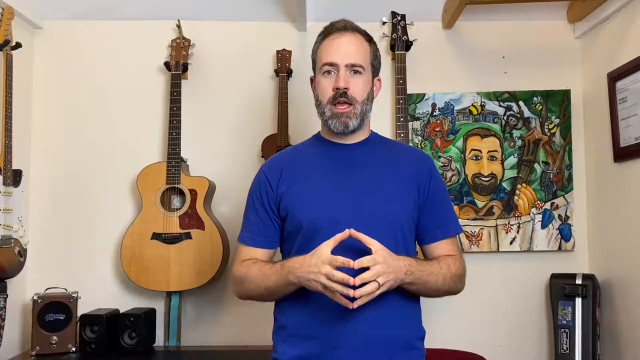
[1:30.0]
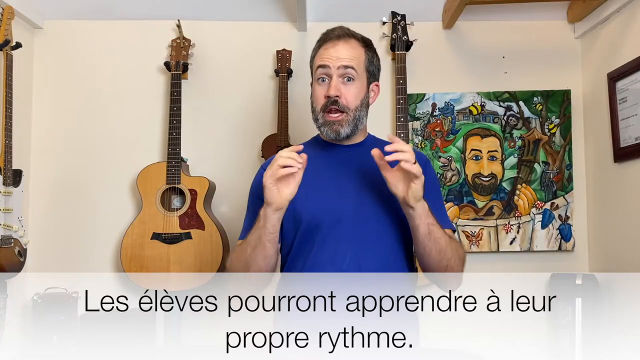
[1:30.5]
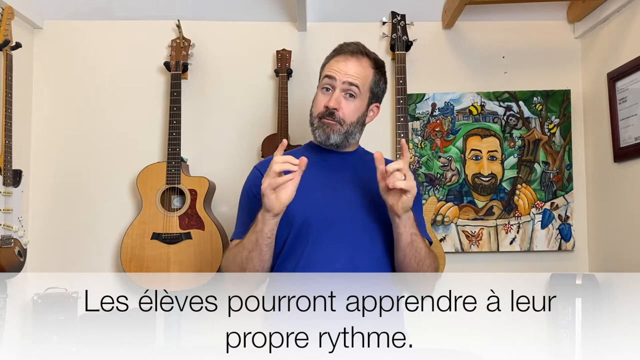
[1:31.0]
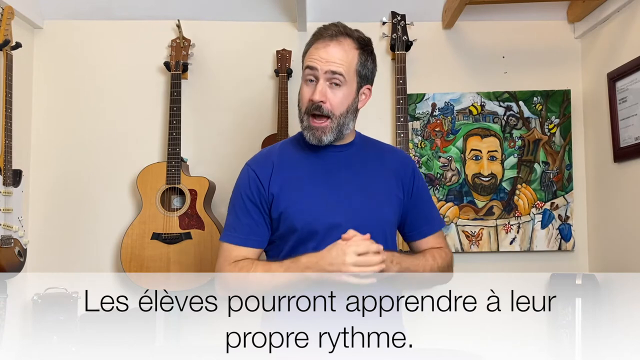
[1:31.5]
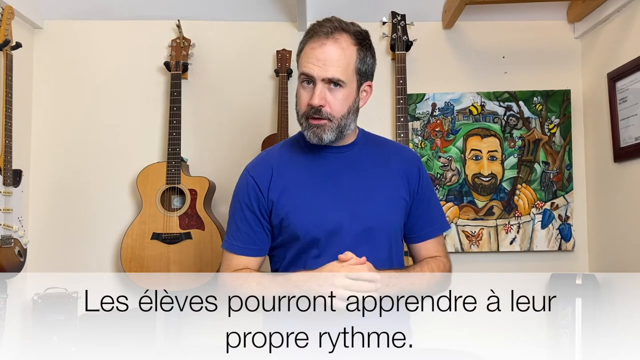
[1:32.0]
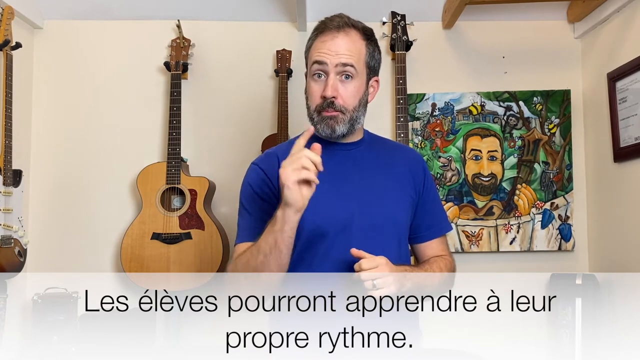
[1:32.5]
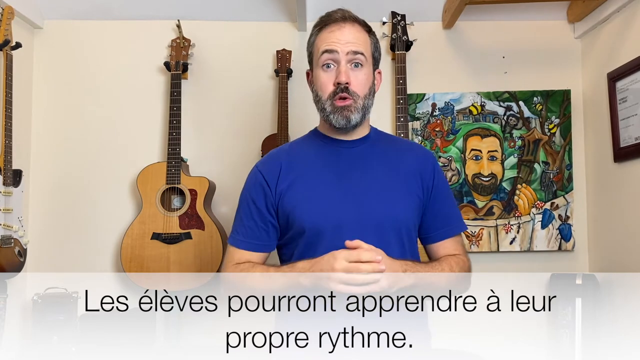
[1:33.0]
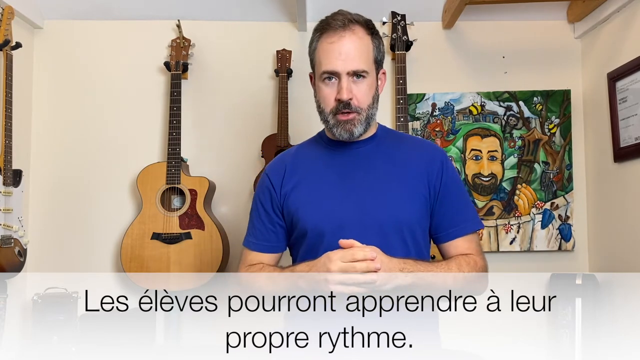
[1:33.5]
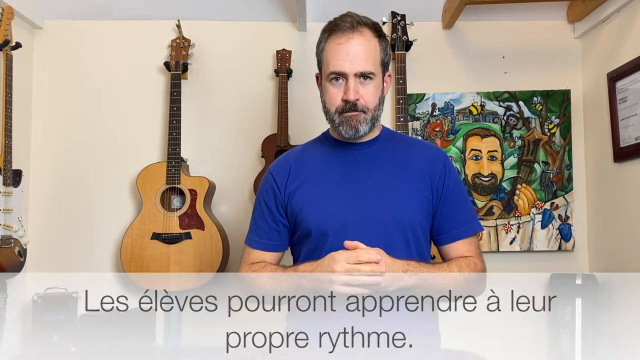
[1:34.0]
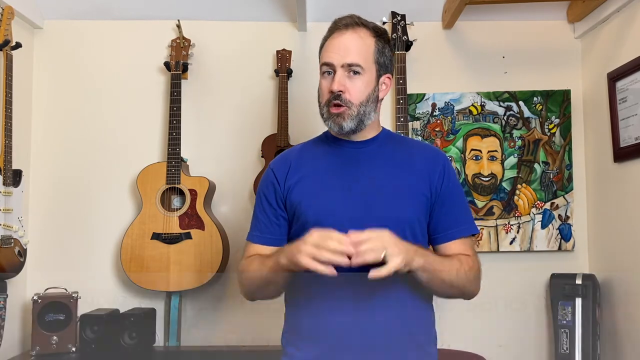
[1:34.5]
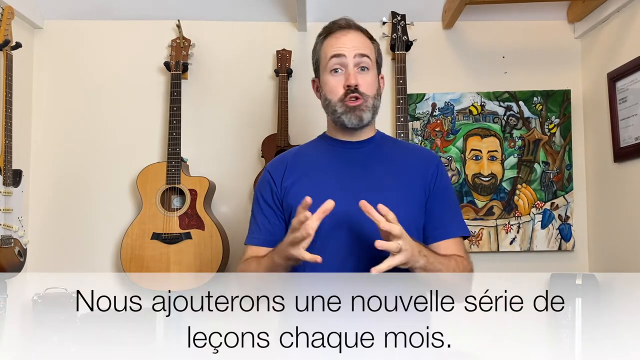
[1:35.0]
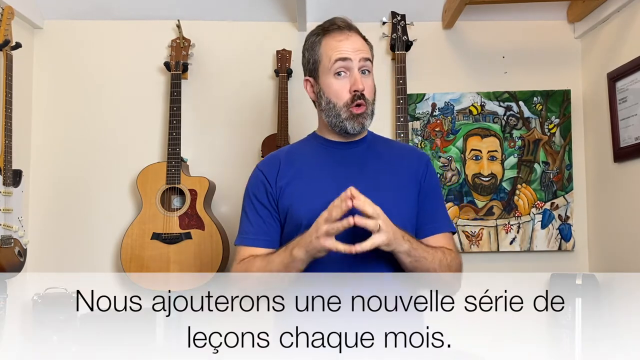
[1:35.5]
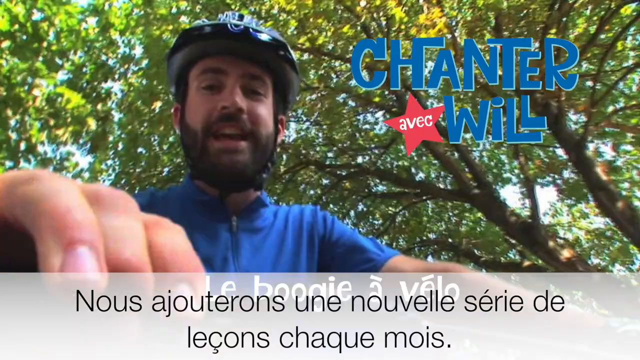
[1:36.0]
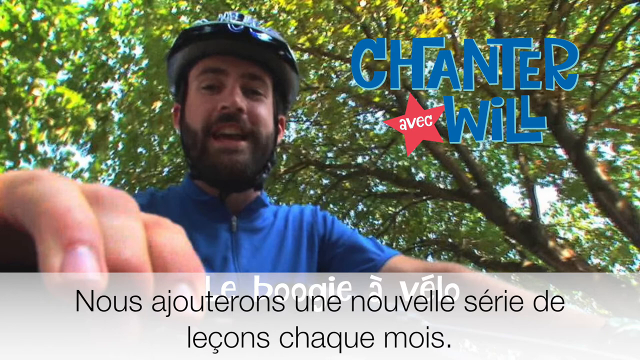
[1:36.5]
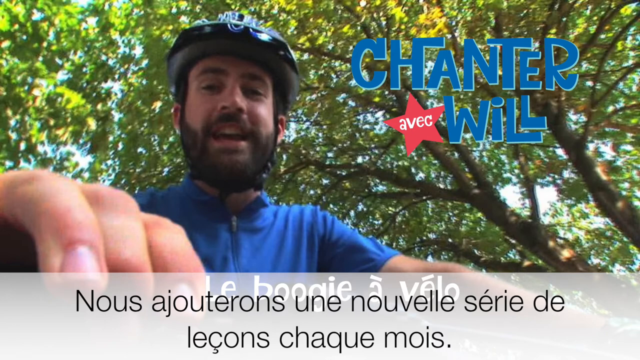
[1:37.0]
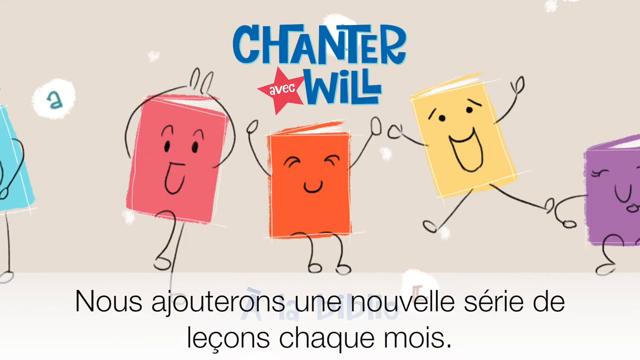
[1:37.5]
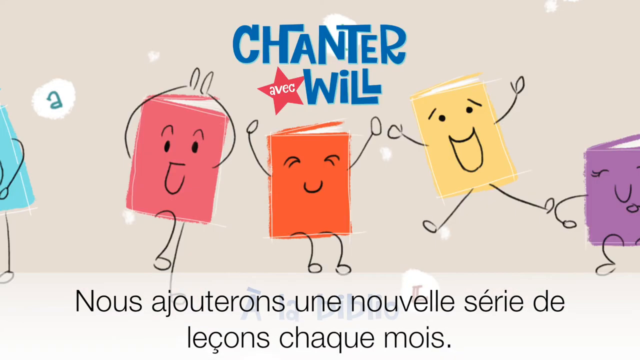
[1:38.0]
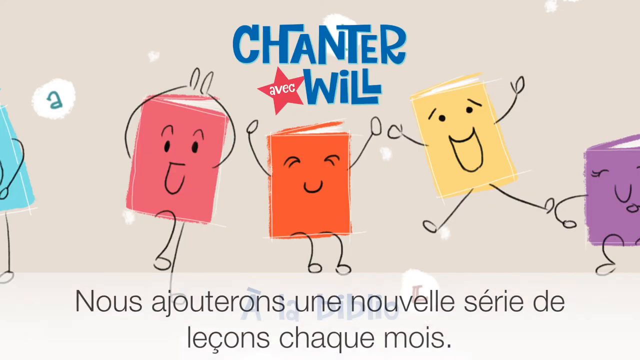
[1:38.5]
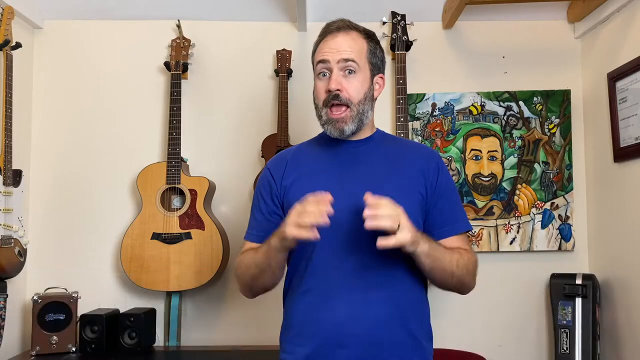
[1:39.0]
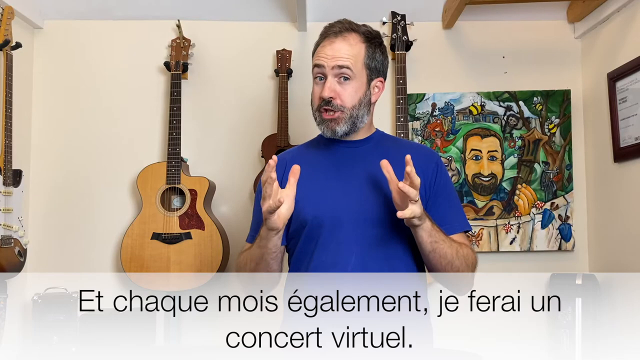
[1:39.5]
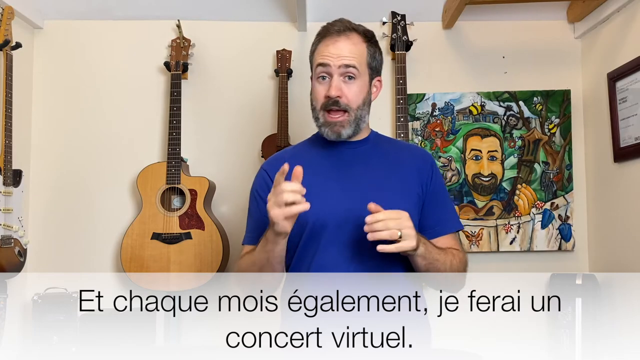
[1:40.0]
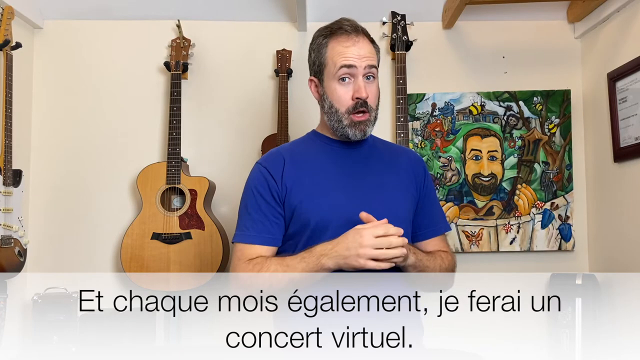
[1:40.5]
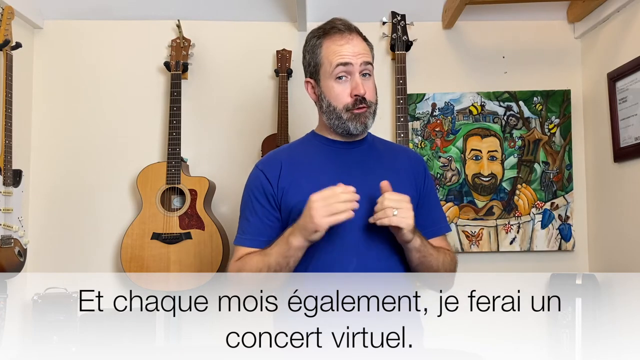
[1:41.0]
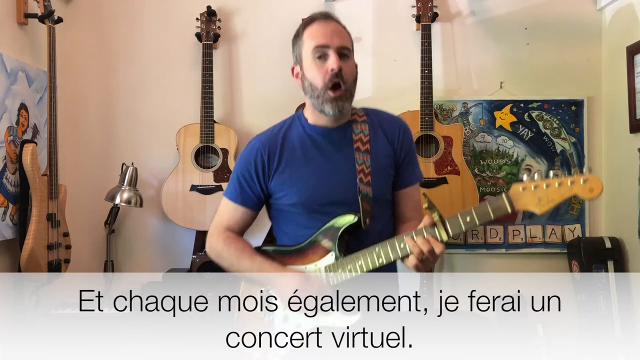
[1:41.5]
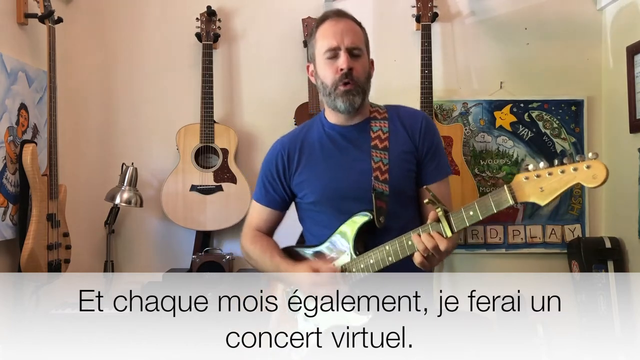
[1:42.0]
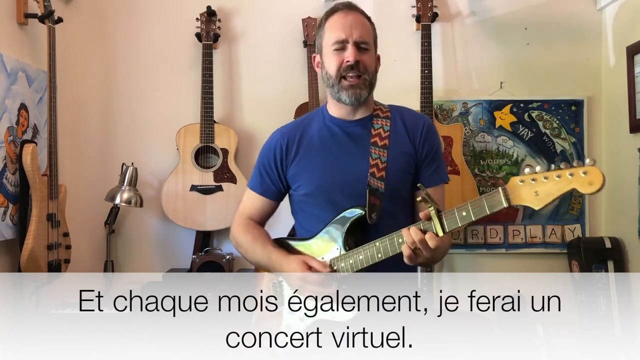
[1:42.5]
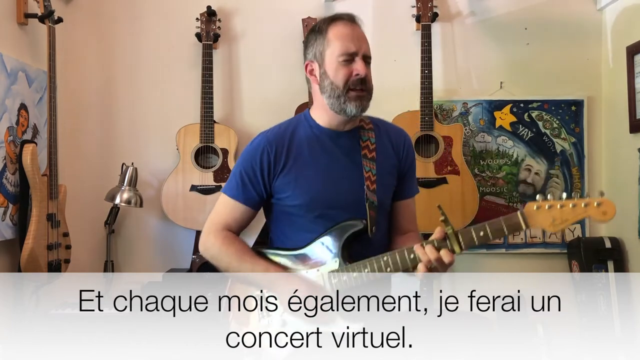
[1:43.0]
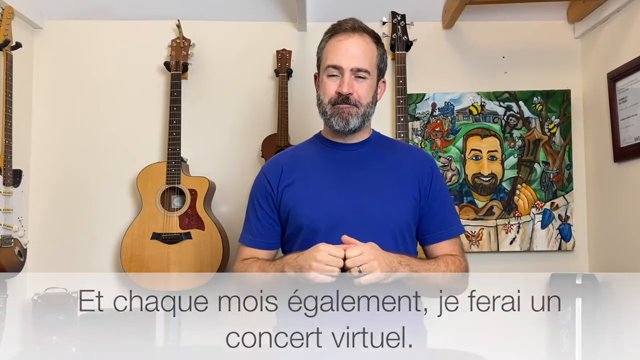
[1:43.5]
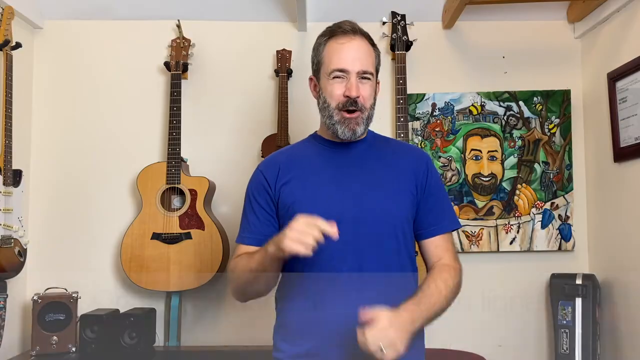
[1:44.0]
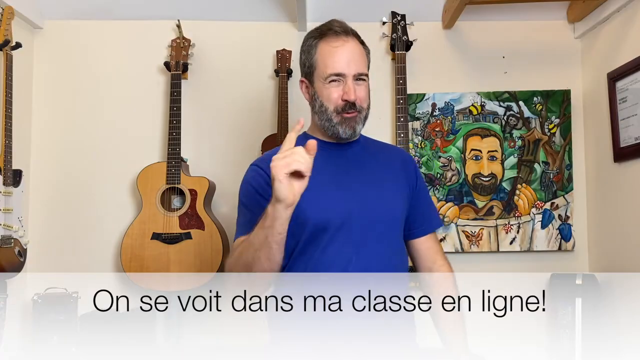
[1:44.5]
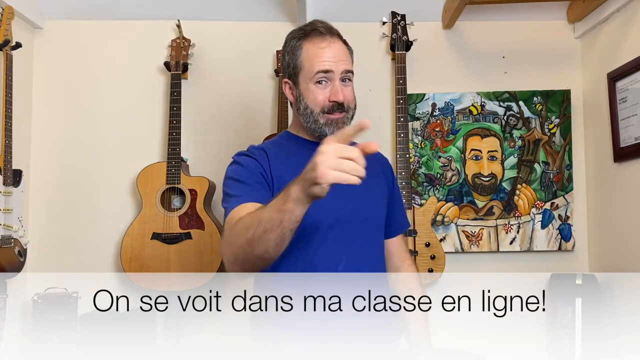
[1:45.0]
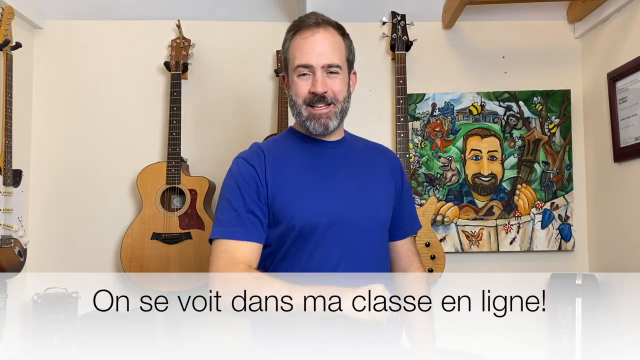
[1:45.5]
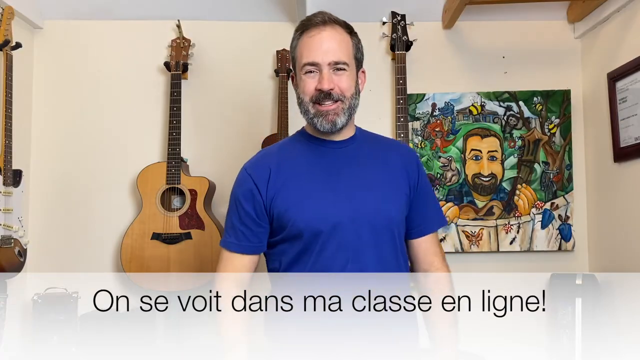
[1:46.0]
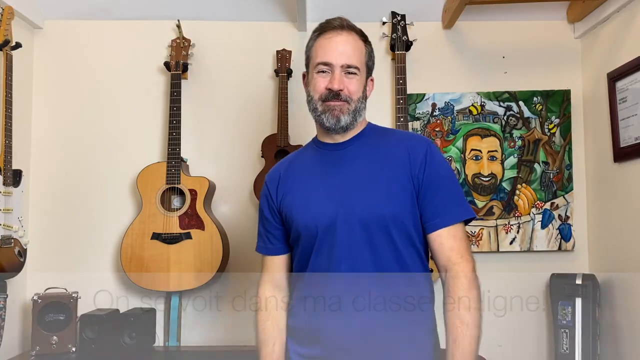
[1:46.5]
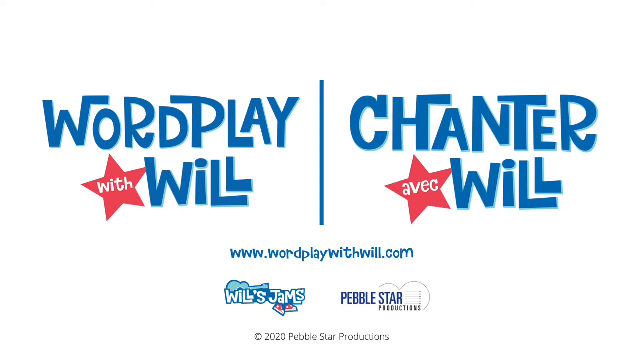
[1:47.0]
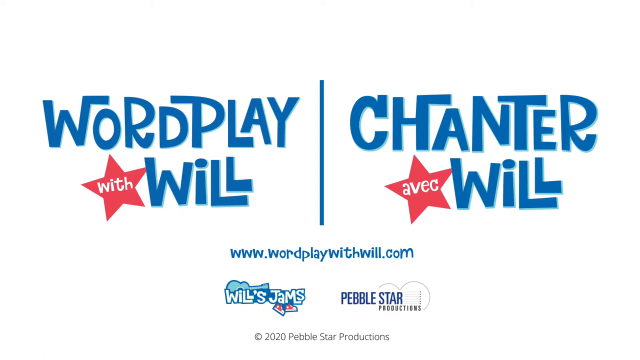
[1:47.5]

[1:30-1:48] A Caucasian man stands in the center of the screen with his hands together, his fingers making something like a diamond. He wears a regular blue short-sleeved t-shirt and has dark hair, dark eyebrows, brown eyes, and a dark beard about 40% gray. Behind him are three walls, and the room looks very small: the left wall is maybe three to four feet at most from the man, as is the right wall, and the back wall is only a foot or two behind him. On the left wall is a white and brown electric guitar. On the back wall, to the left, is a light tan or light brown guitar with dark brown accents, and two other guitars behind the man show only their bridges. On the right side of the back wall is a cartoonish or illustrated-looking painting of the same man holding a guitar. On the right wall is a framed paper, certificate or document. At the top right corner, just the very end of a ladder is visible on the ceiling.